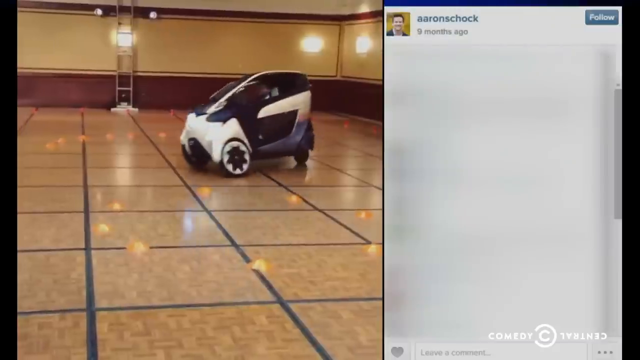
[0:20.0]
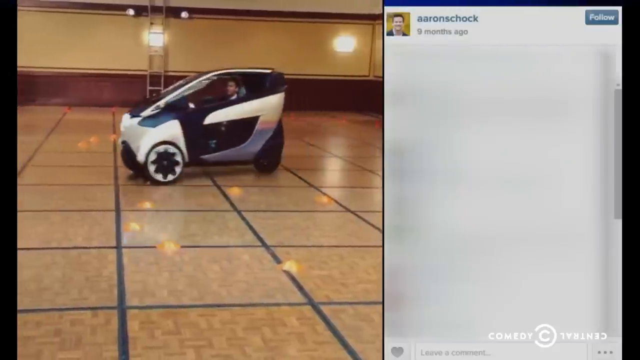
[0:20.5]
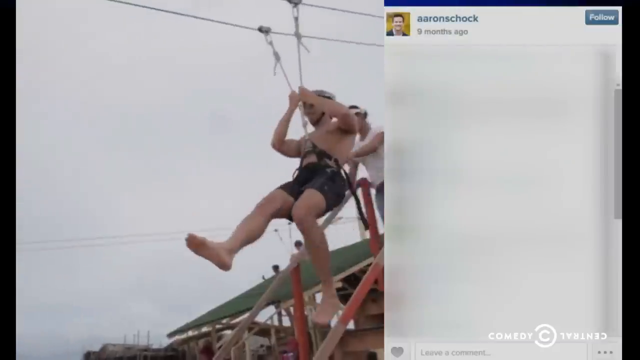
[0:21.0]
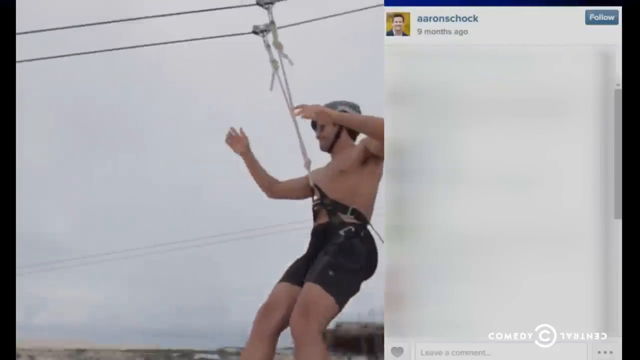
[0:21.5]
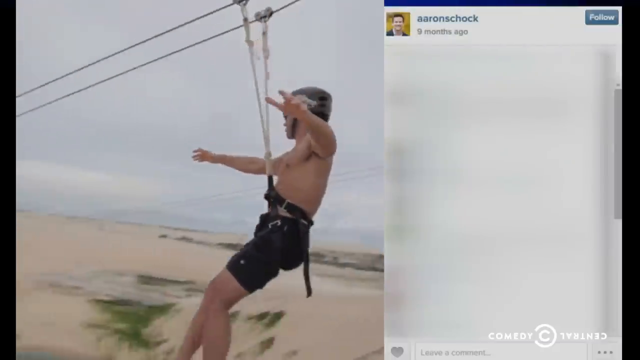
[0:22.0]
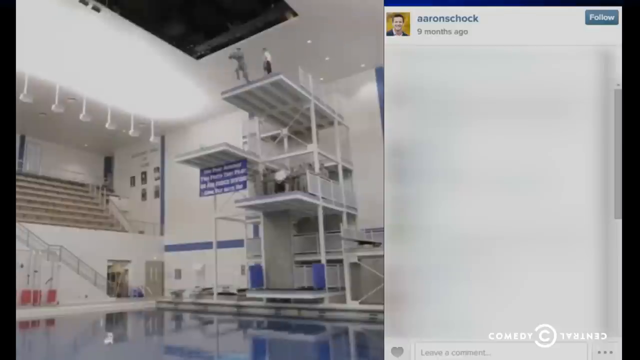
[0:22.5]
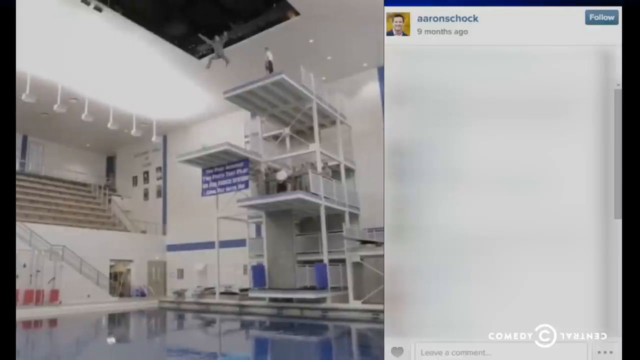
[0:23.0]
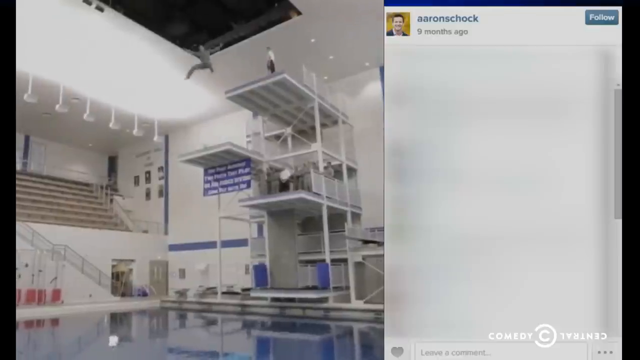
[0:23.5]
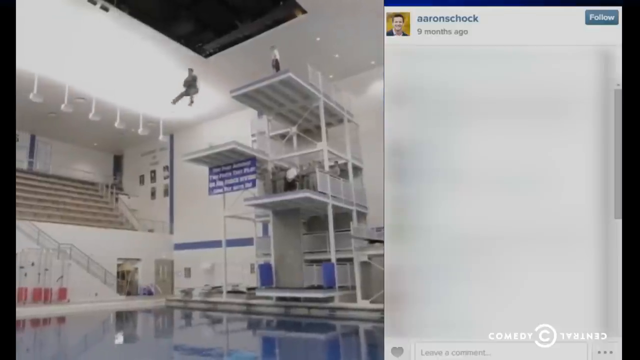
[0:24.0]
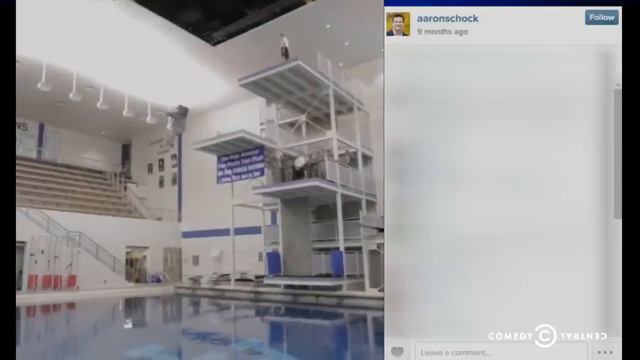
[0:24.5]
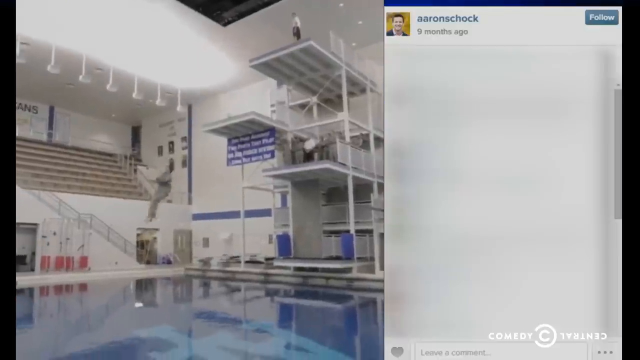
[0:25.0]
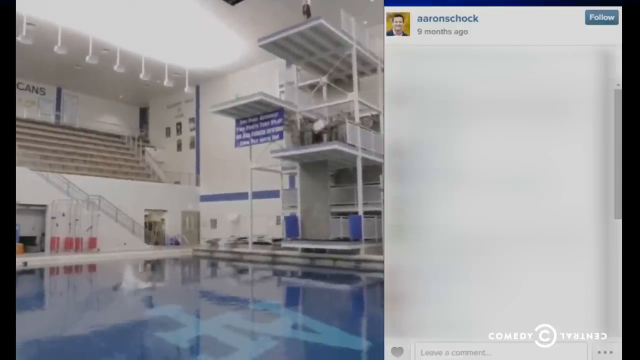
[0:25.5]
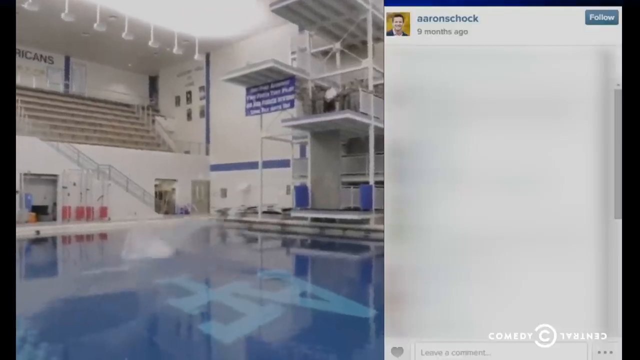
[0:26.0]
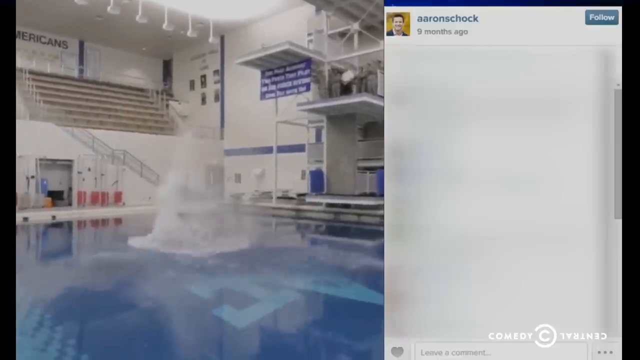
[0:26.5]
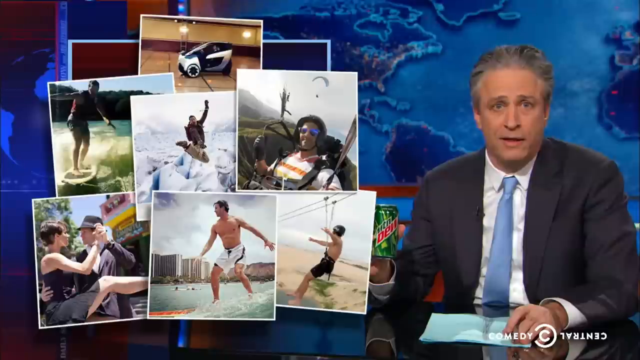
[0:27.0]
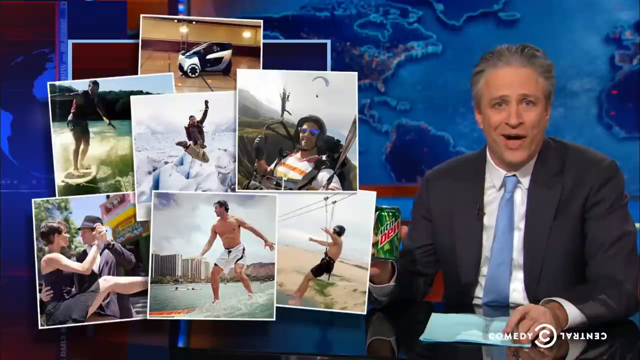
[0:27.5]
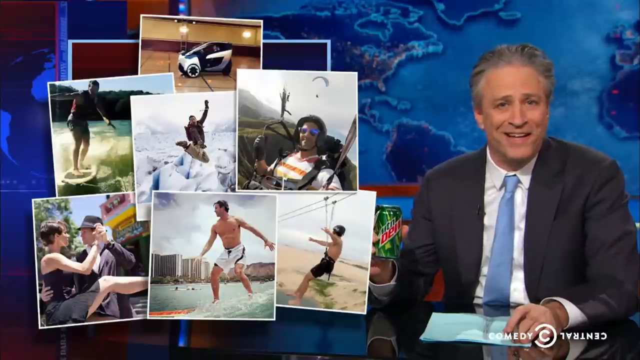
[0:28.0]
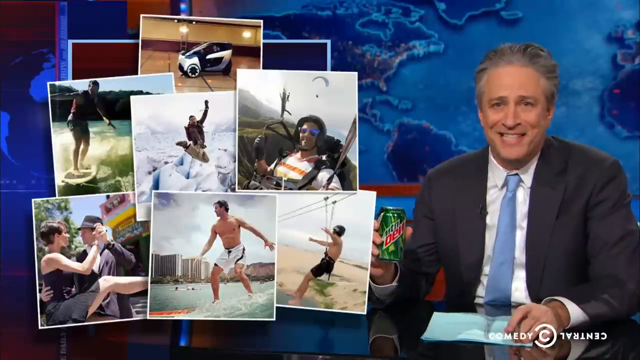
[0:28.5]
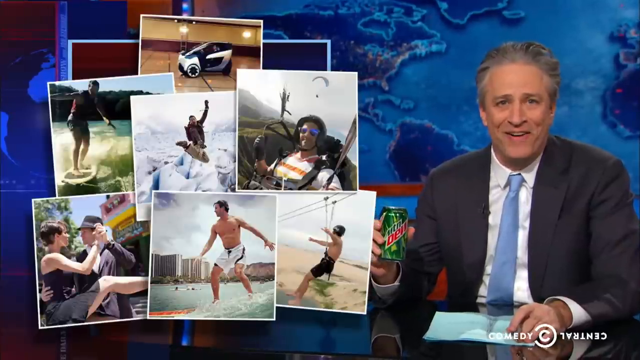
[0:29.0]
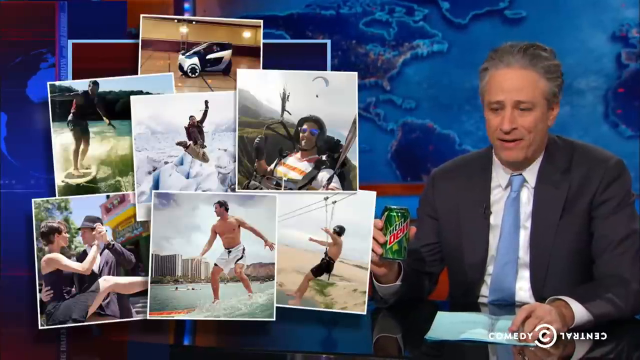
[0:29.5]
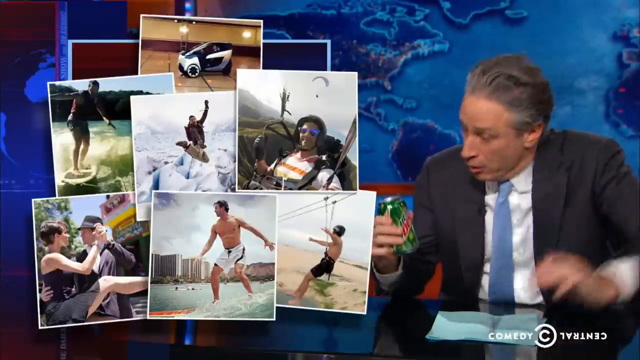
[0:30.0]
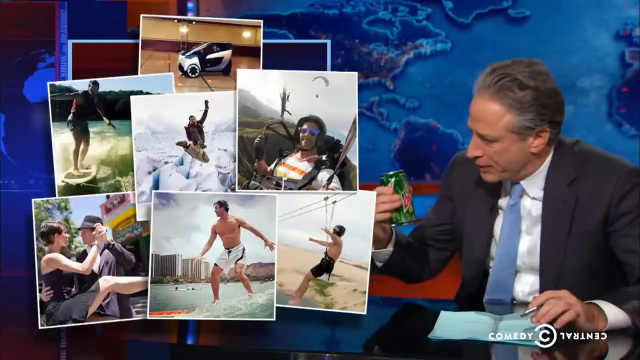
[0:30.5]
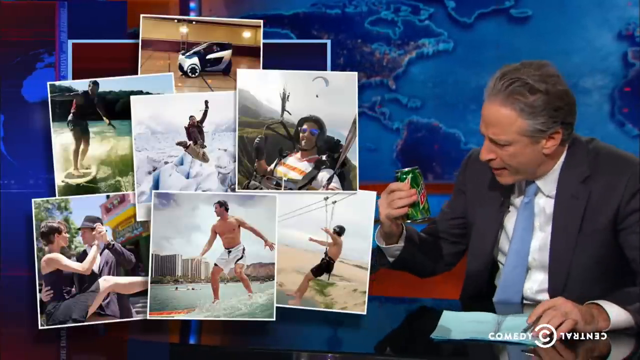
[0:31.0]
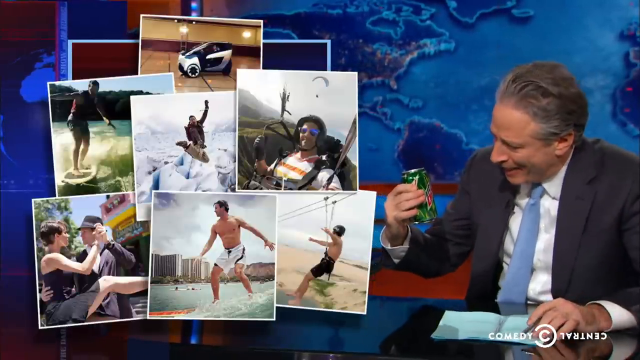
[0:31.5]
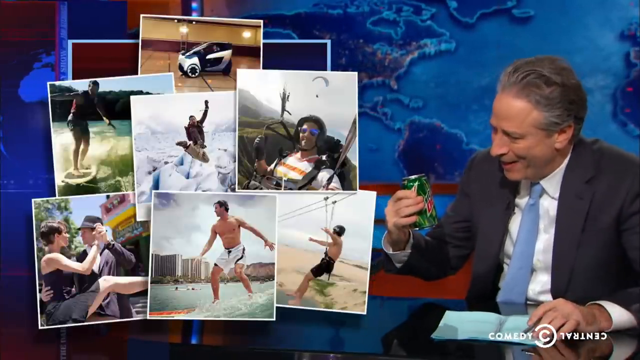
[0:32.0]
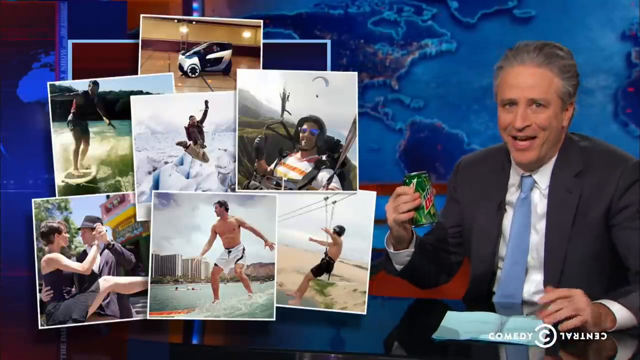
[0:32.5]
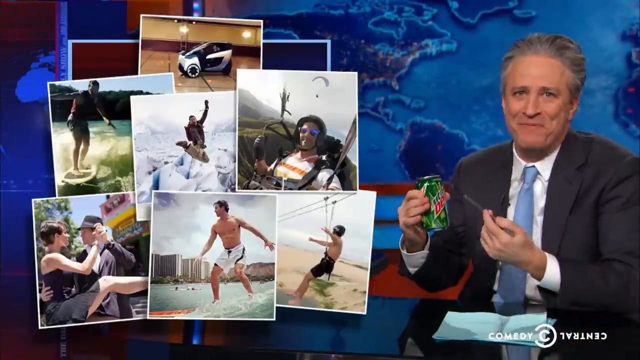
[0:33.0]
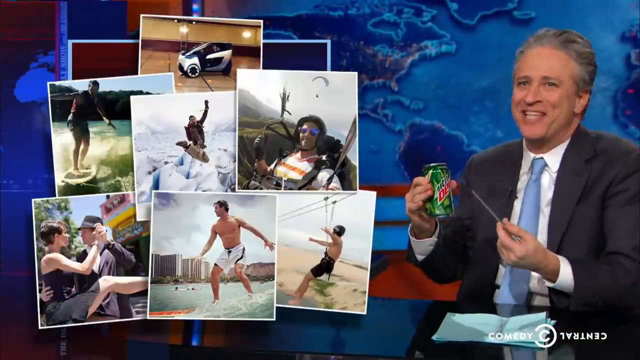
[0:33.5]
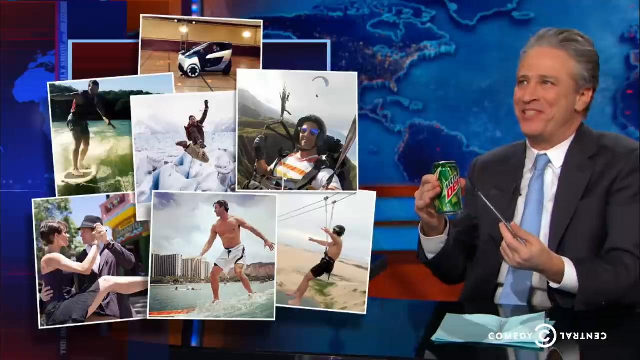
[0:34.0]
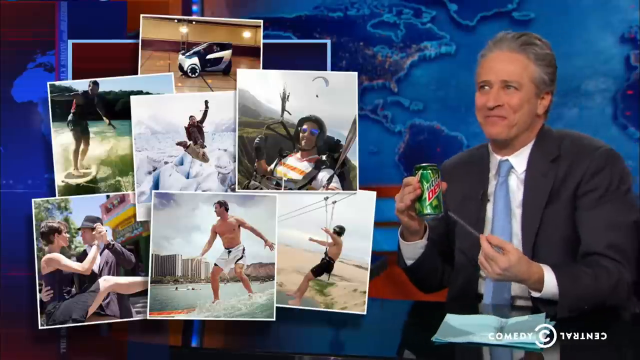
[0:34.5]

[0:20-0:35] Footage shows a man, apparently Aaron Schock, on various vacations, with videos and photos of himself from social media. A collage of these images appears as the video cuts back to Jon Stewart on The Daily Show, showing a lot of surfing, paragliding, time on the beach, dancing, and testing a car. Jon Stewart, sitting at his desk, holds a can of Mountain Dew and talks at it, then looks back out at the audience with a big grin on his face, seeming to find it very funny.